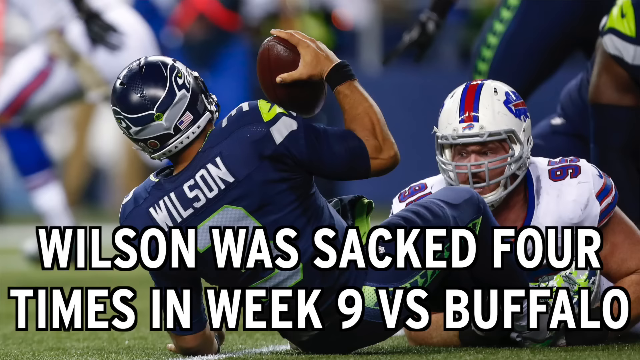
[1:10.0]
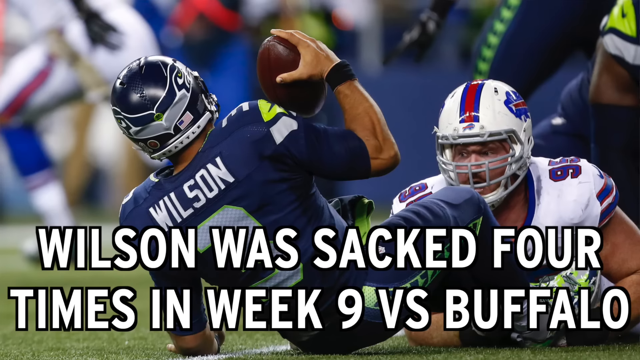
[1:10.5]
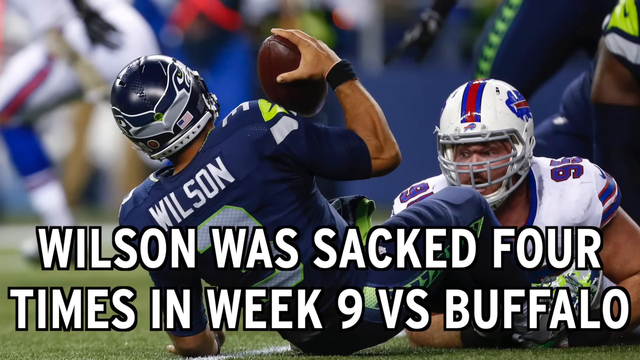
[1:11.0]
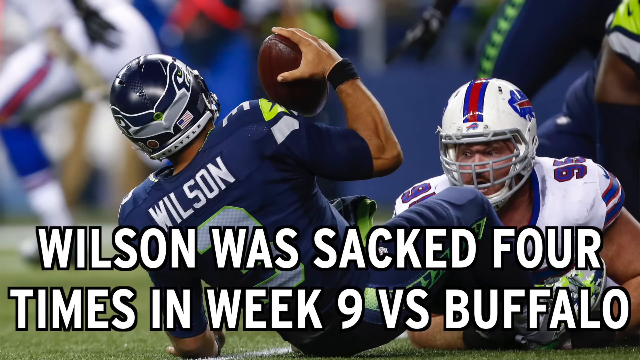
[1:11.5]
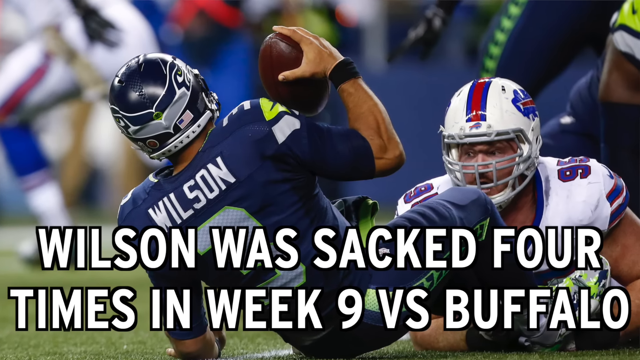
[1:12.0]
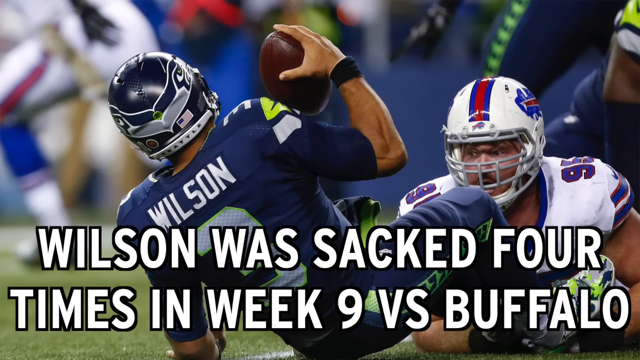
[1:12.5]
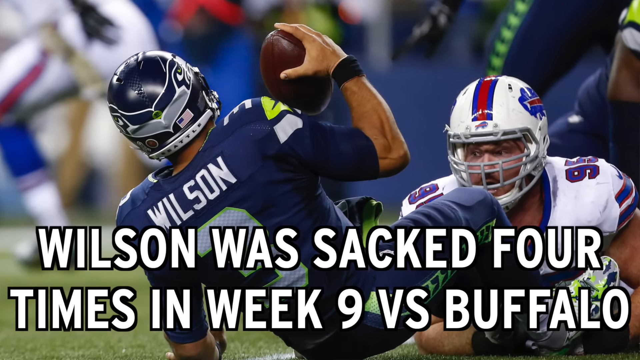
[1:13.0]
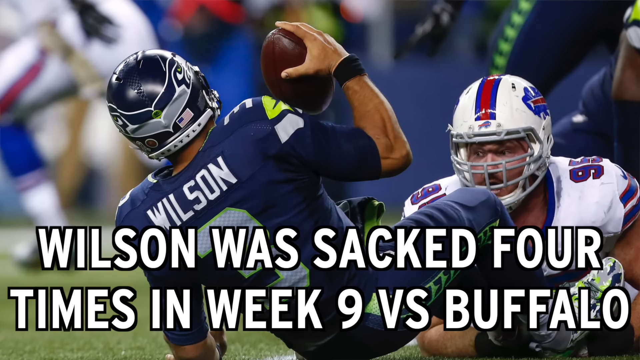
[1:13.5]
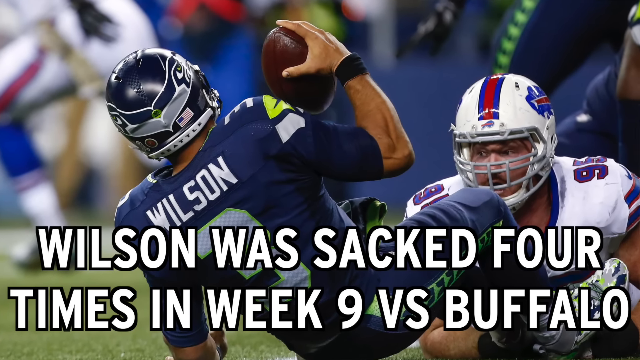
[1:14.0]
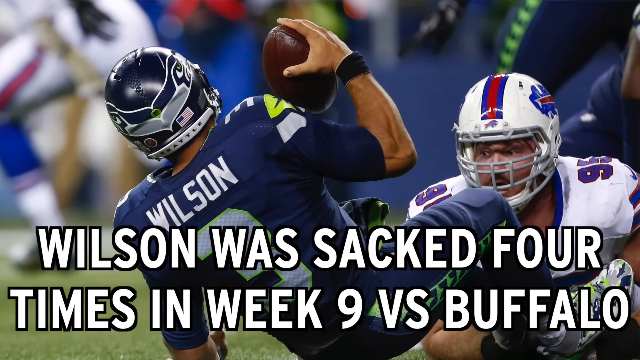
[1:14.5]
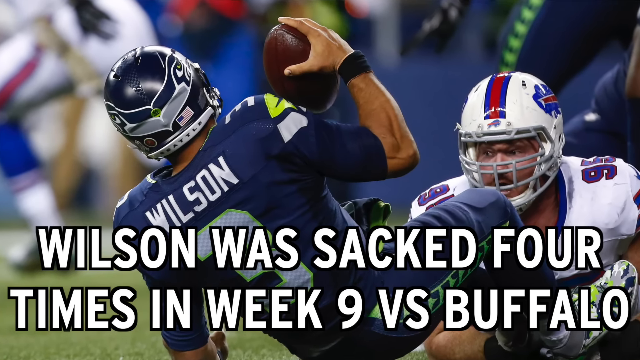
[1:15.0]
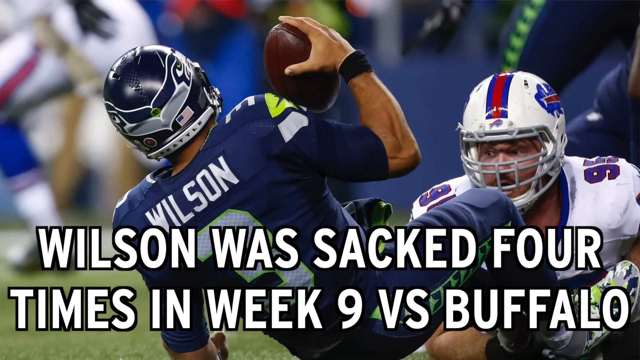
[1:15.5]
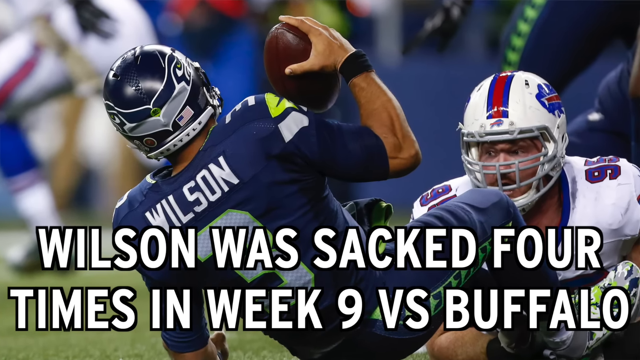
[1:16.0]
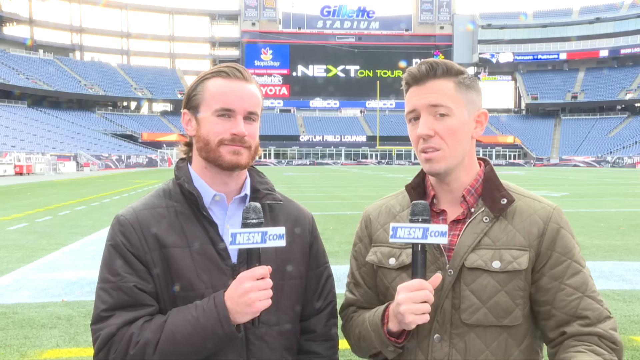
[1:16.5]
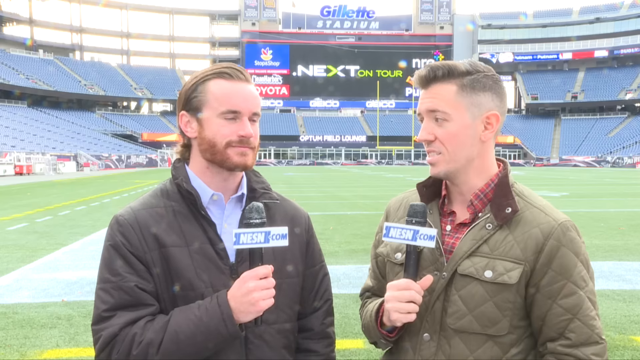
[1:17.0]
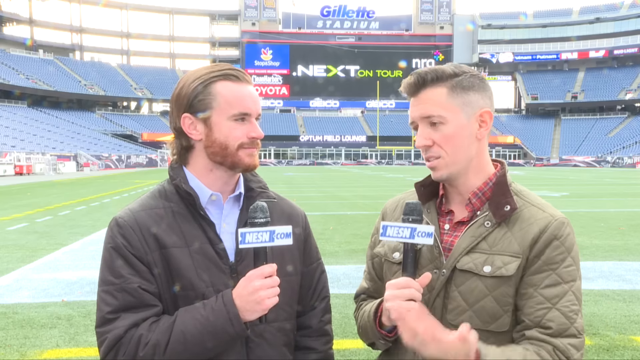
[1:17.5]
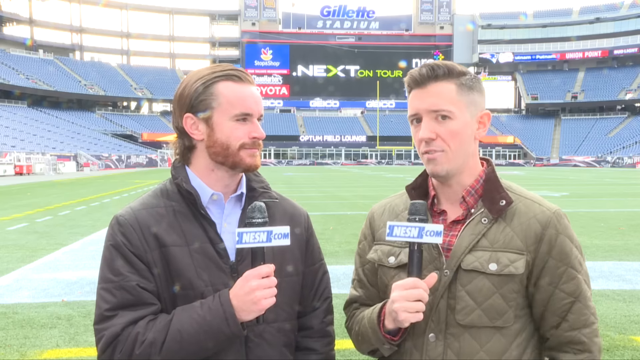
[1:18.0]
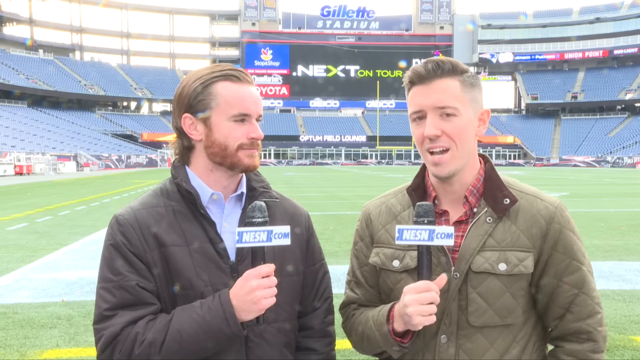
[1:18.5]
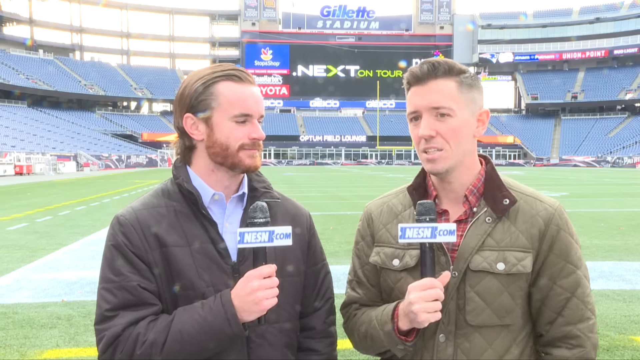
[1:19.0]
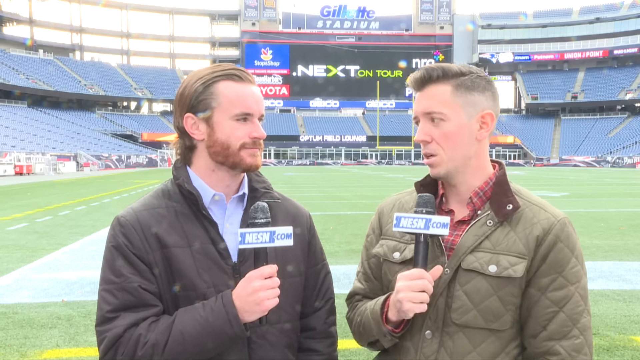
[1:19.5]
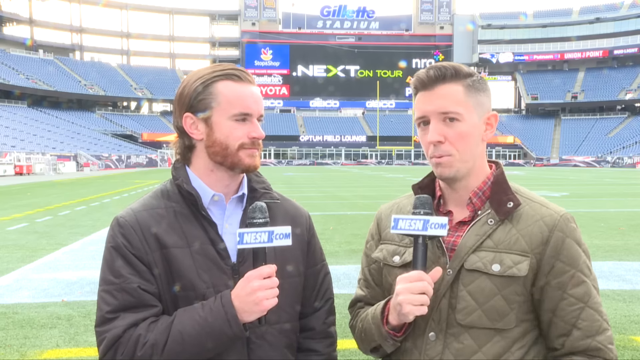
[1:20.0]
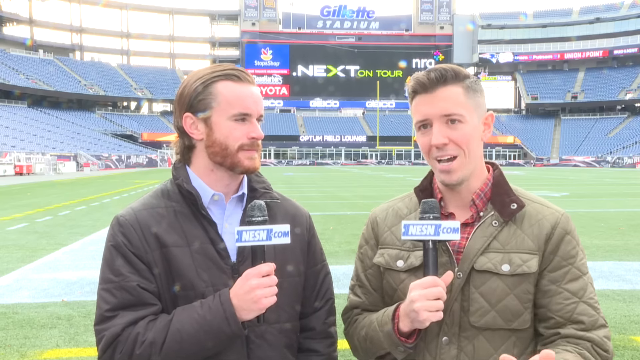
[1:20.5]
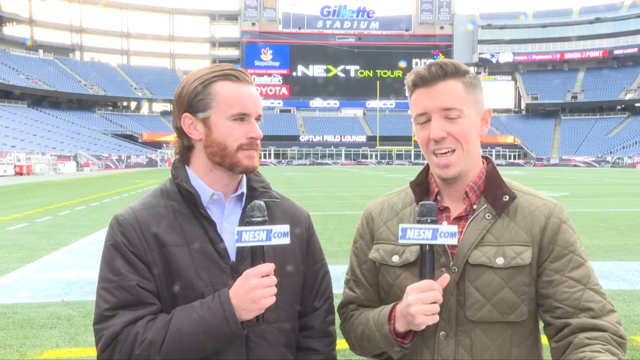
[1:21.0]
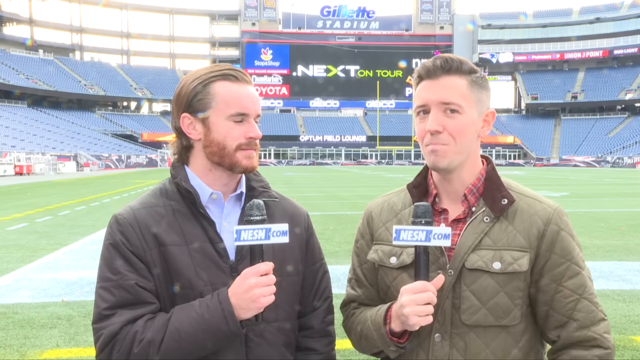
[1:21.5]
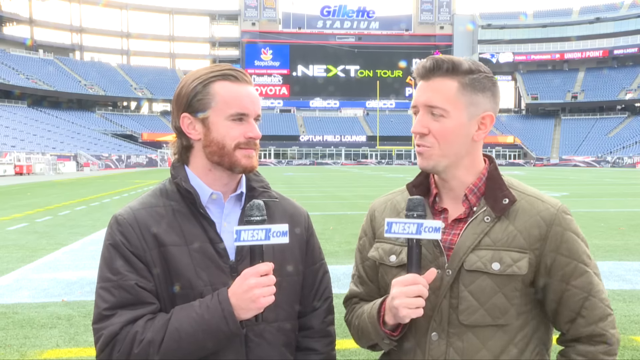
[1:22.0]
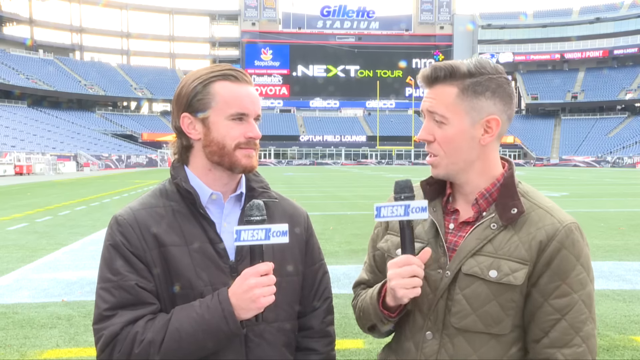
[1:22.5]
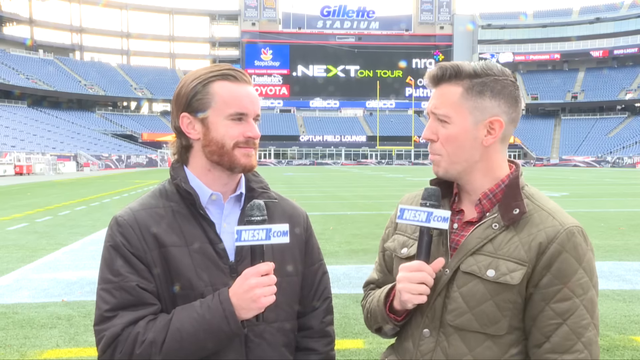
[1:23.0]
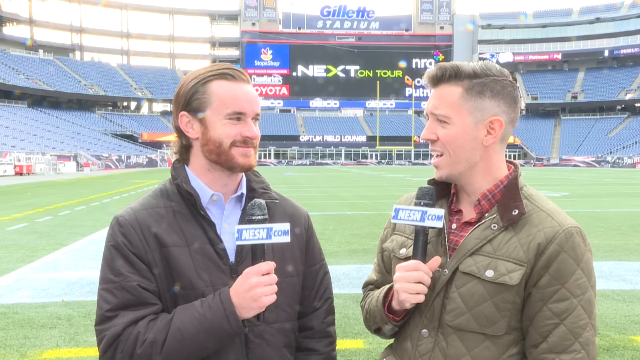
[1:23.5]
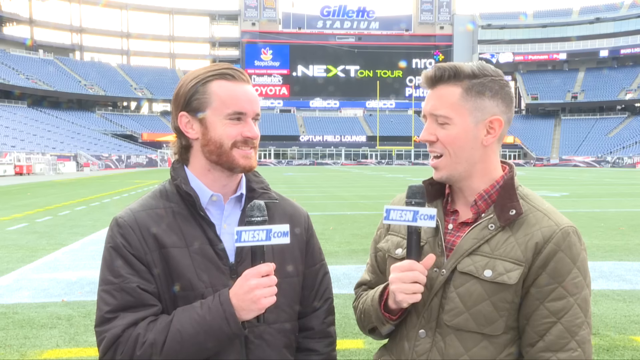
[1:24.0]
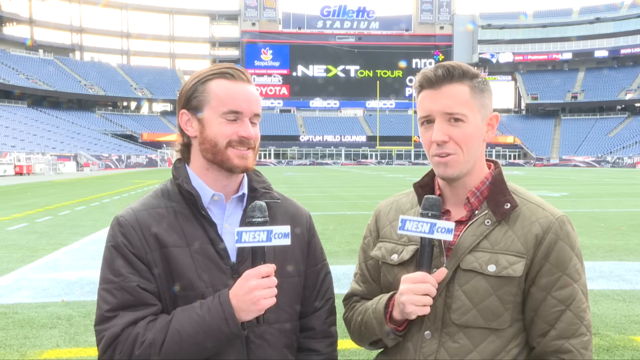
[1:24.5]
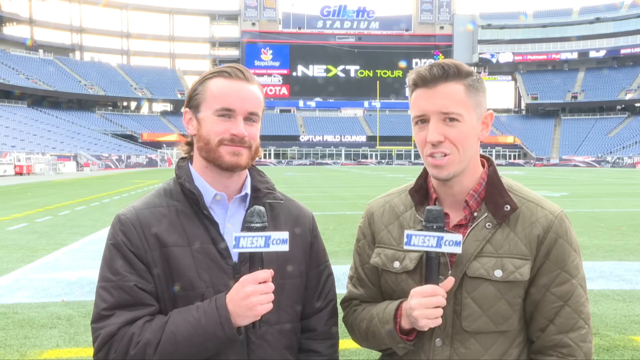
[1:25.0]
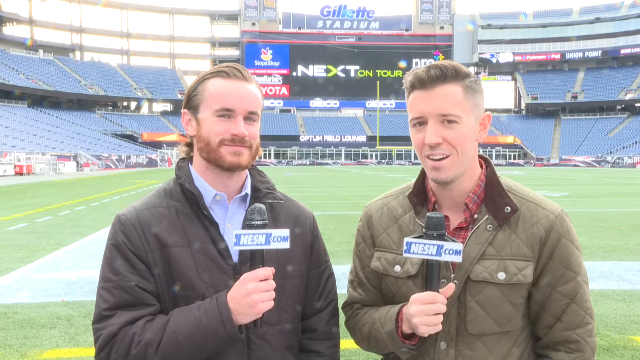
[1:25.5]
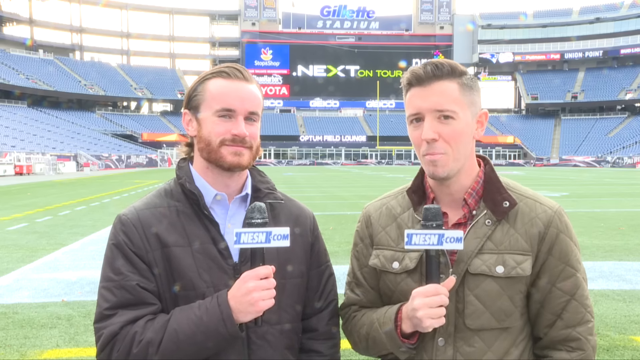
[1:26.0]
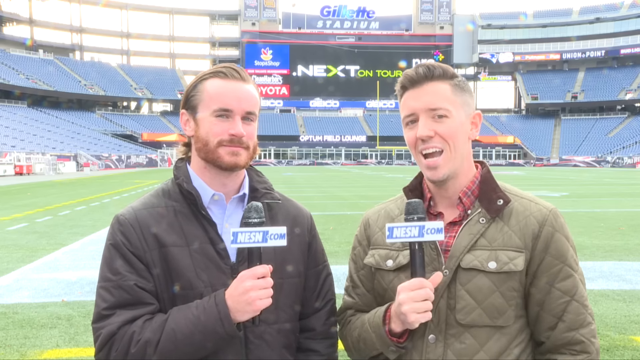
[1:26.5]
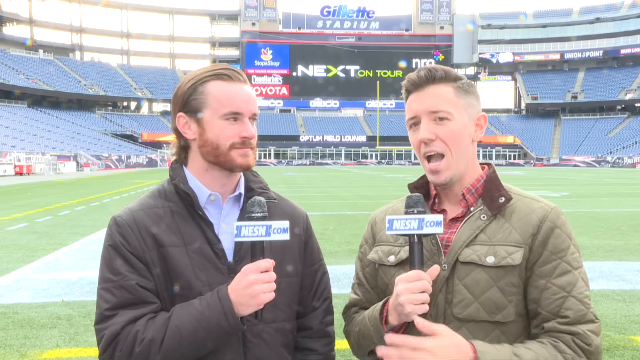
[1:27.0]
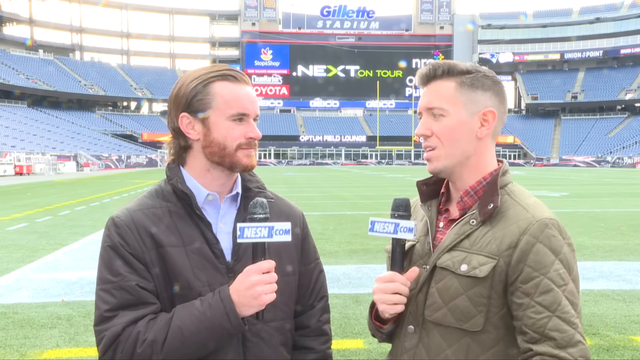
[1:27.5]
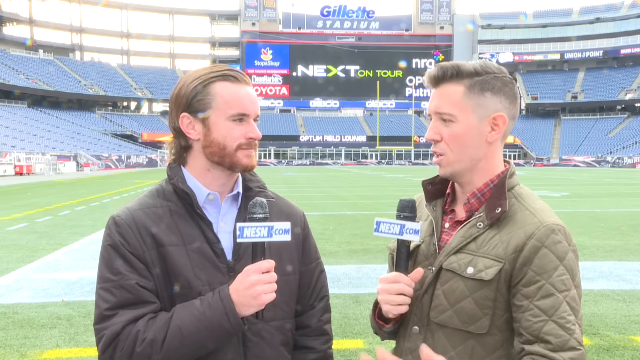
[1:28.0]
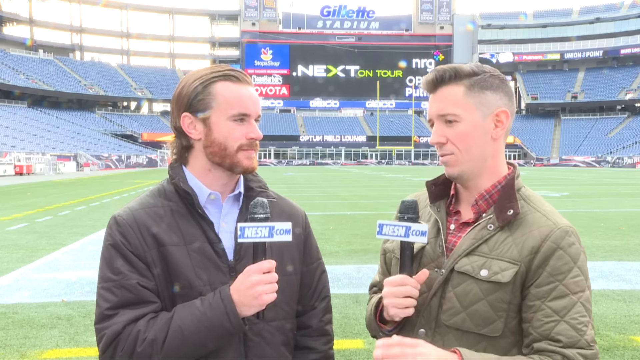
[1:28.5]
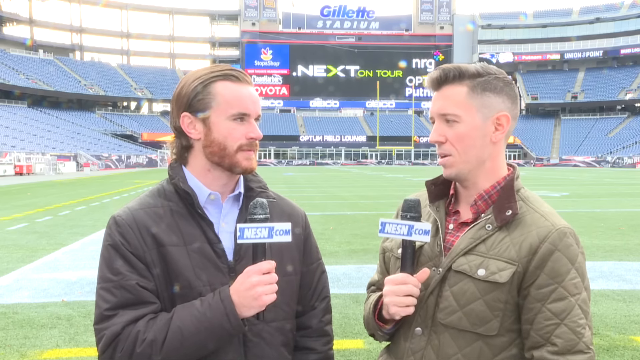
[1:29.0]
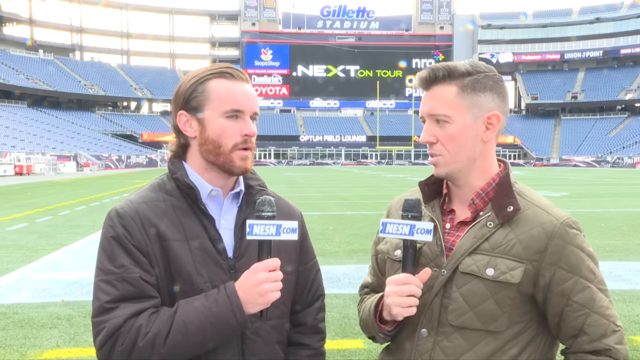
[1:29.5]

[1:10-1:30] Two sportscasters speak in front of a football field. The video cuts away to a picture of two players on the field with the text "Wilson was sacked four times in week nine, versus Buffalo." The men speak into microphones with boxes reading "NESN.com." They are at the end of the stadium and seem to be in a box with a perimeter around them, though it could just be markings on the field; exactly where they stand is hard to tell. The entire length of the field is behind them. "Gillette Stadium" is visible, and the big black screen reads "Next on tour." Over the head of one of the sportscasters is what appears to be "NRG," though it is hard to see. There is a Toyota sign, what looks like a blue Stop and Shop sign with its logo, and something about "Optum Field" on the lower portion of the stadium.